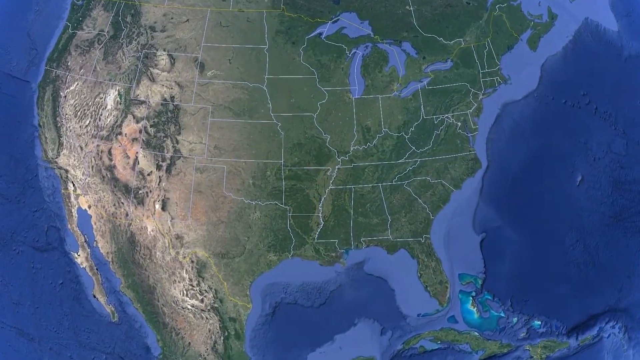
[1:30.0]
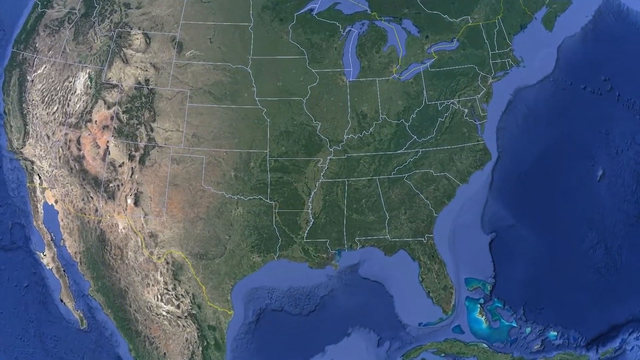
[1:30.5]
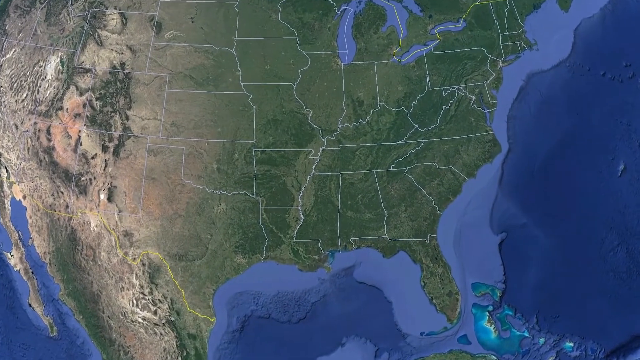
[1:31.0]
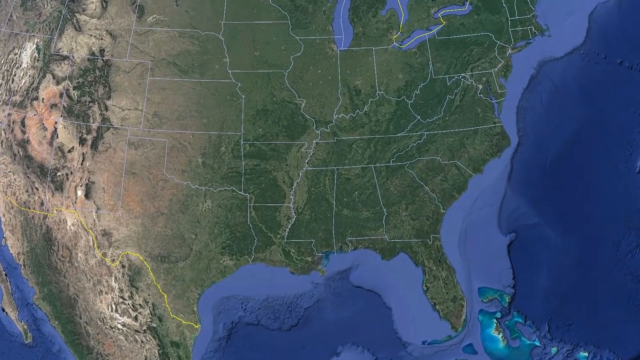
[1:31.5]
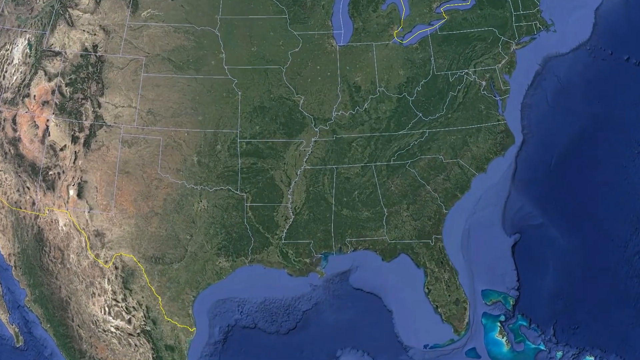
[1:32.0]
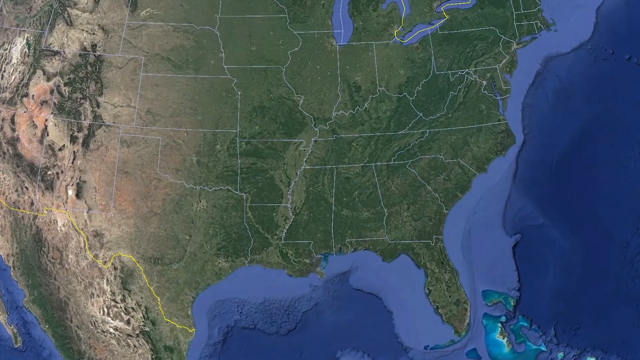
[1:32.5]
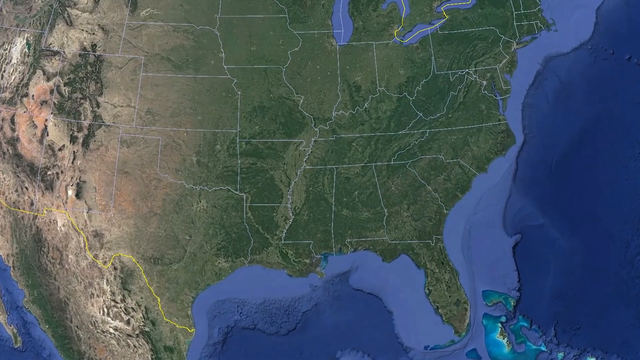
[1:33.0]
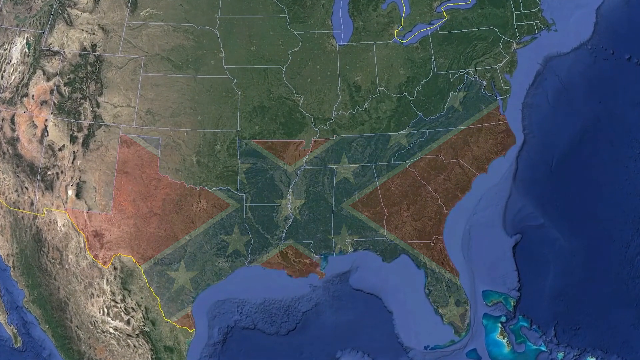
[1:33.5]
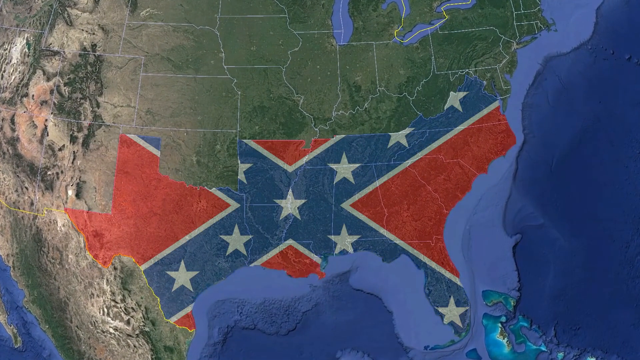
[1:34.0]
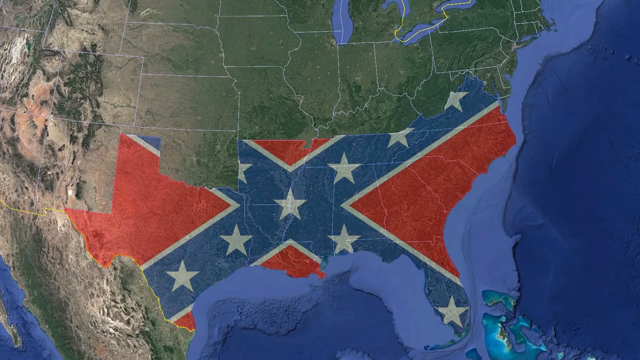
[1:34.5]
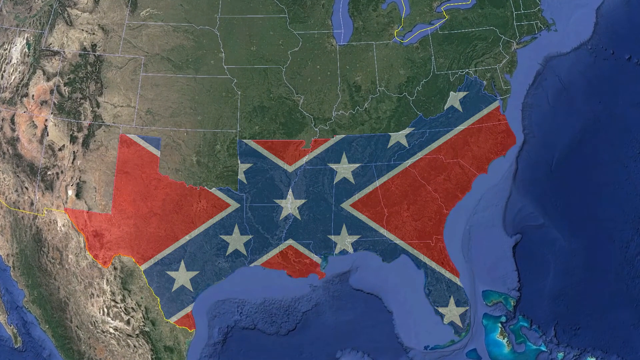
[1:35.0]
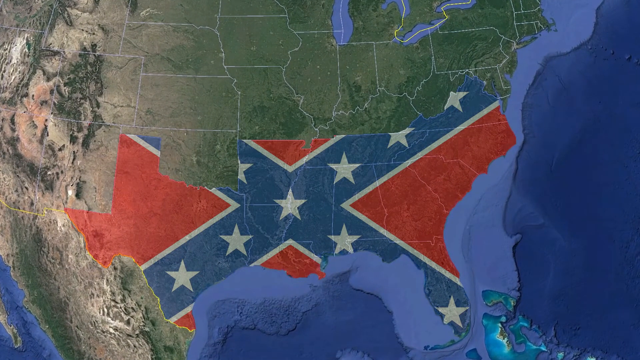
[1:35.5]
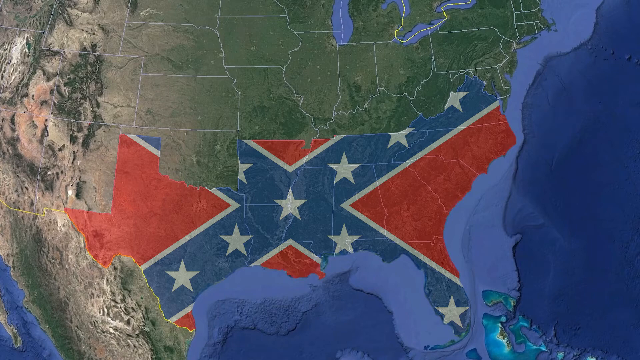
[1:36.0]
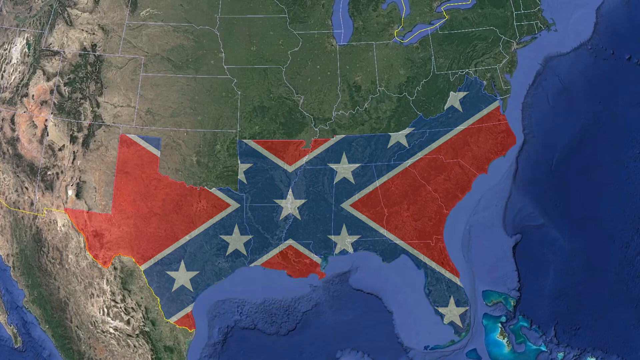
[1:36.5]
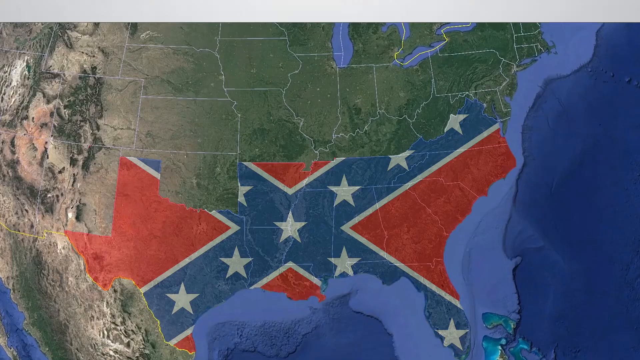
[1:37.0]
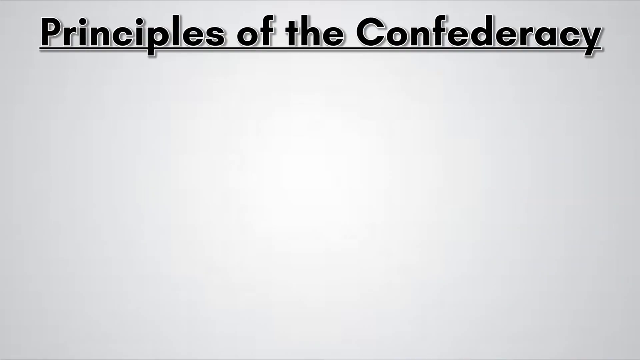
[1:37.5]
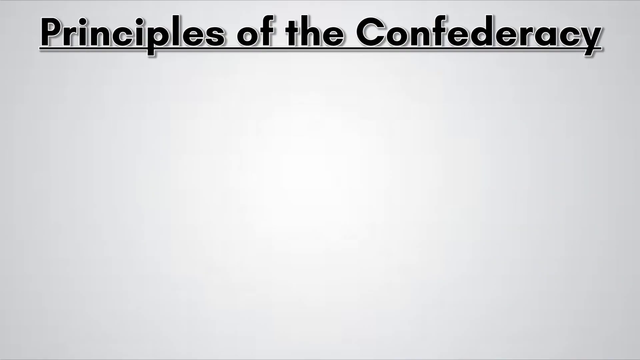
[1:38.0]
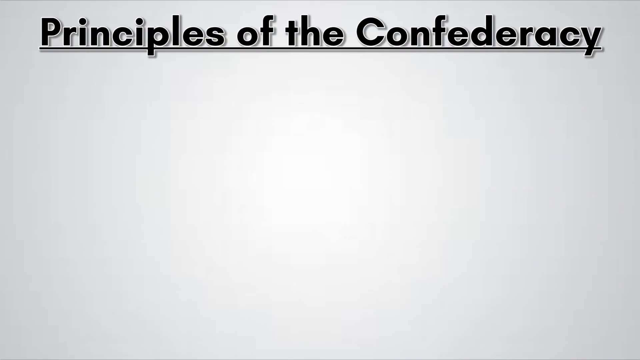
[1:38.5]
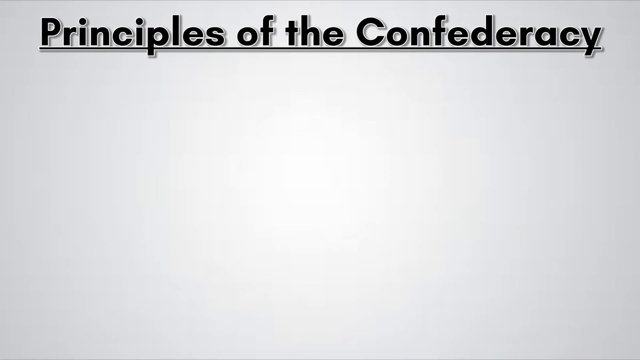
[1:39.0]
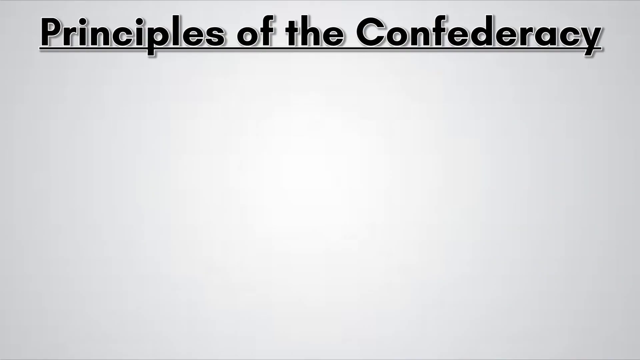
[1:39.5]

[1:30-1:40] The United States of America is shown zoomed in from the globe once again, and the southeastern portion is once again colored in with a Confederate flag. Text reads "the principles of the Confederacy" in black on a white background. The oceans are shown in blue and light blue, and state lines are shown along with mountainous terrain.